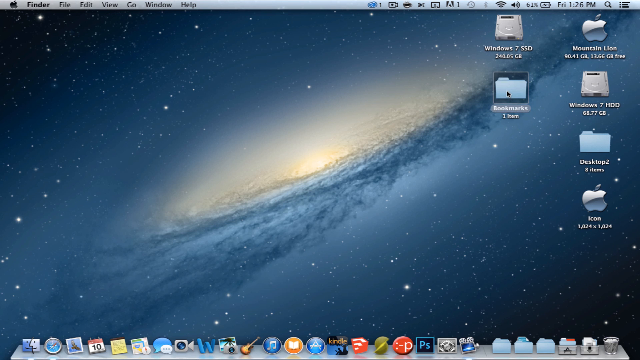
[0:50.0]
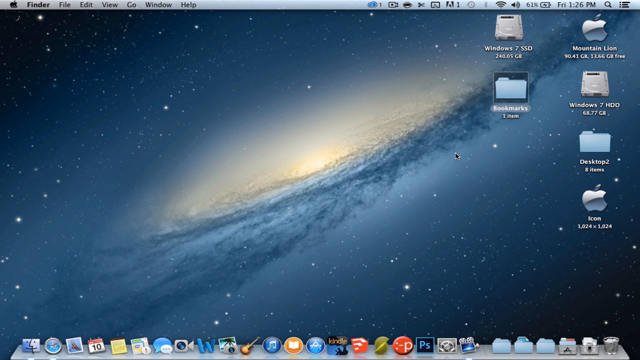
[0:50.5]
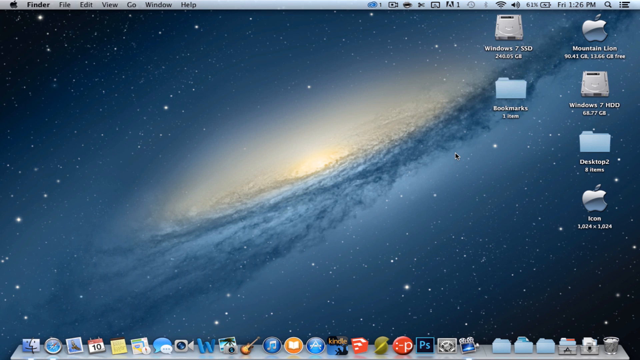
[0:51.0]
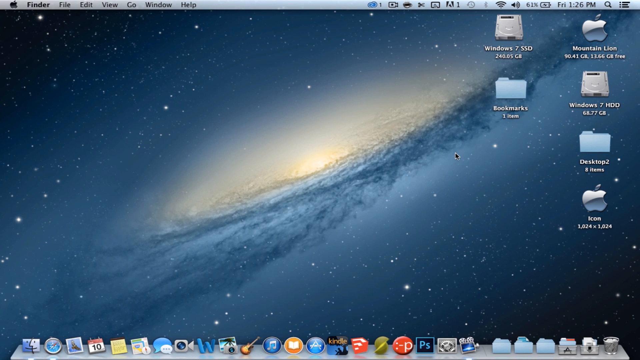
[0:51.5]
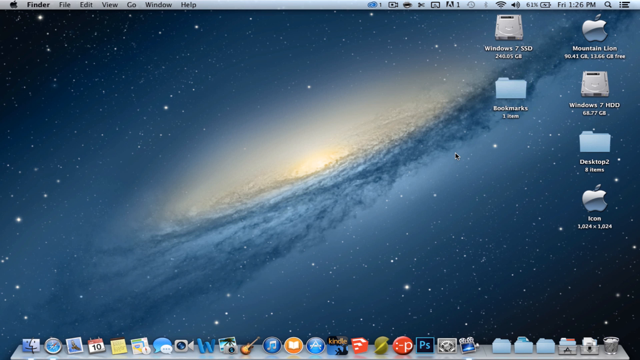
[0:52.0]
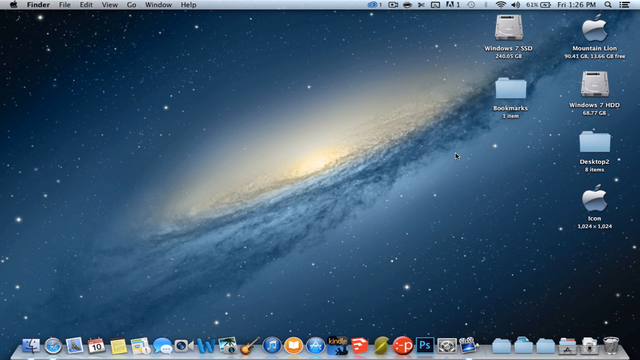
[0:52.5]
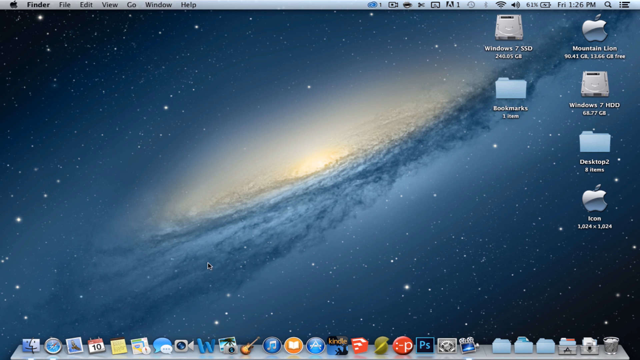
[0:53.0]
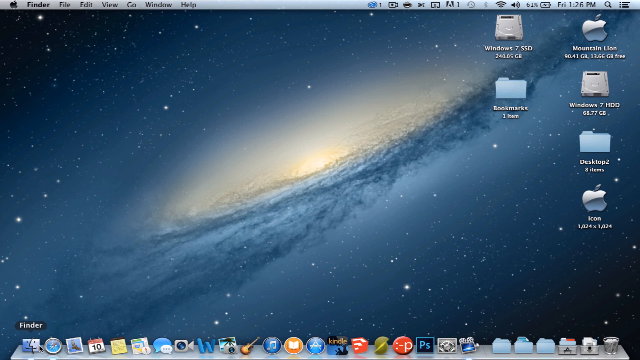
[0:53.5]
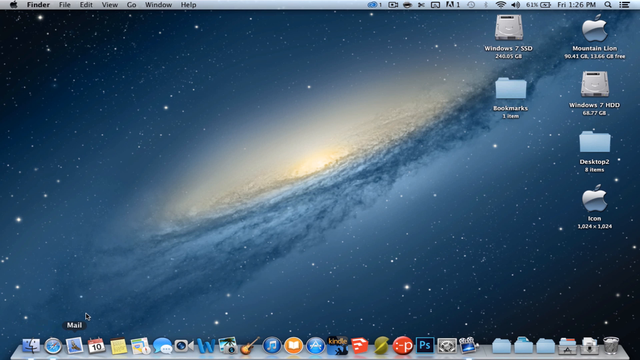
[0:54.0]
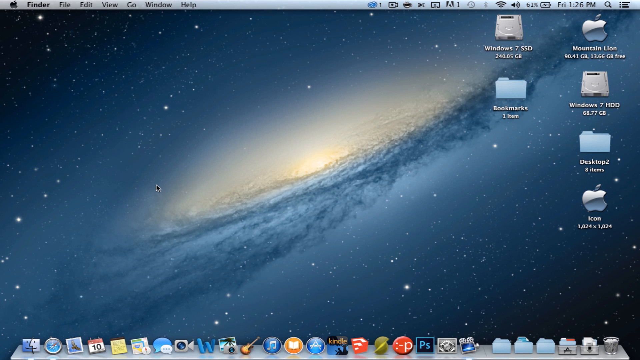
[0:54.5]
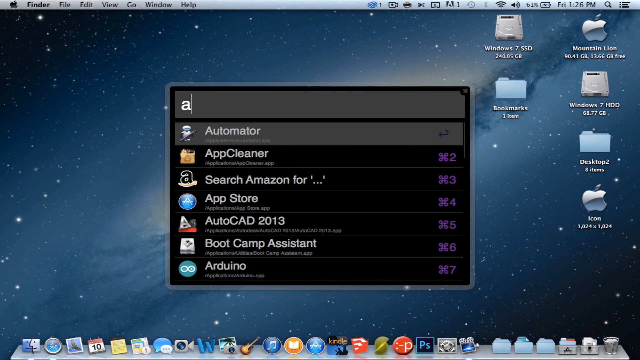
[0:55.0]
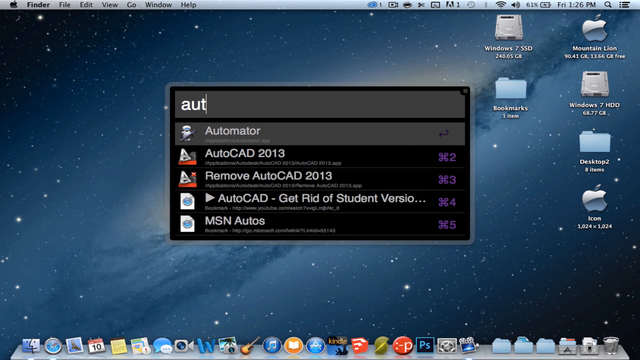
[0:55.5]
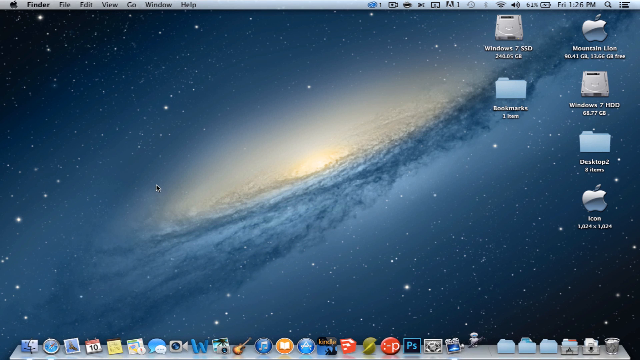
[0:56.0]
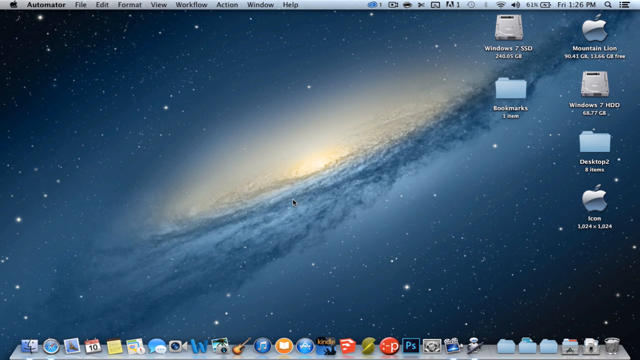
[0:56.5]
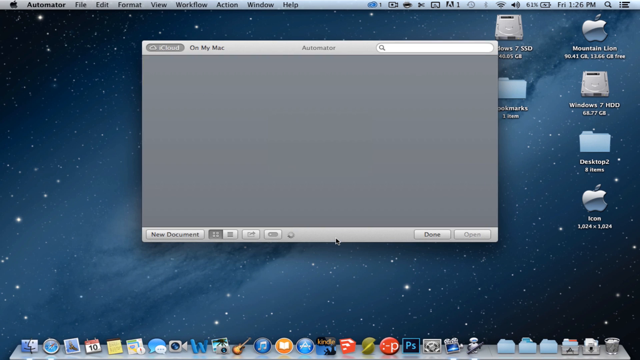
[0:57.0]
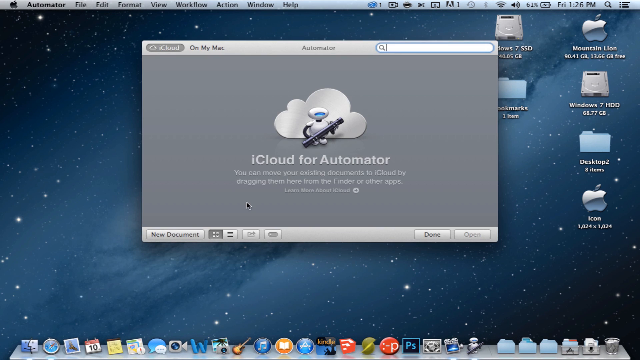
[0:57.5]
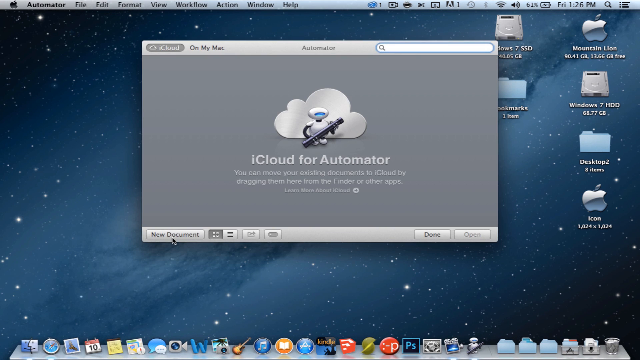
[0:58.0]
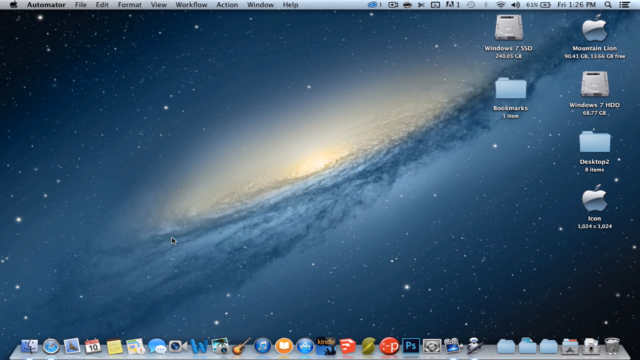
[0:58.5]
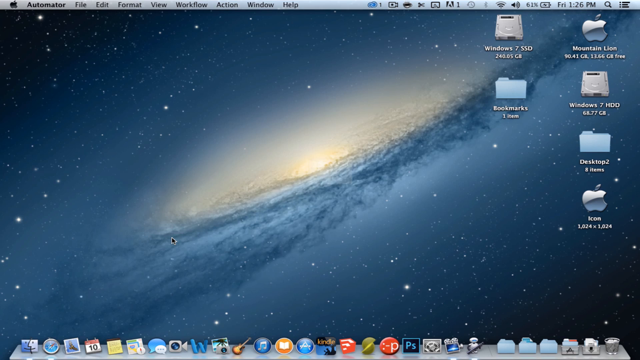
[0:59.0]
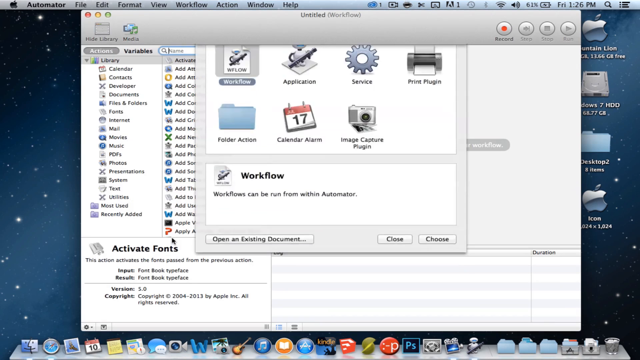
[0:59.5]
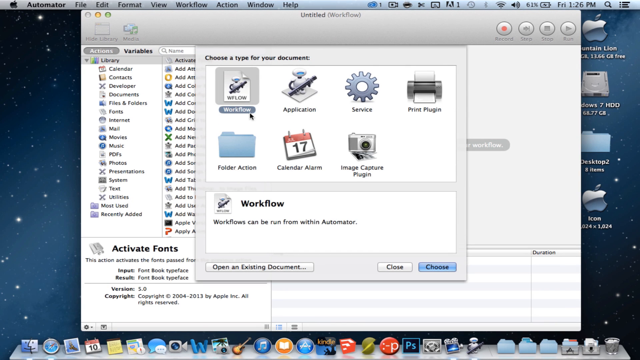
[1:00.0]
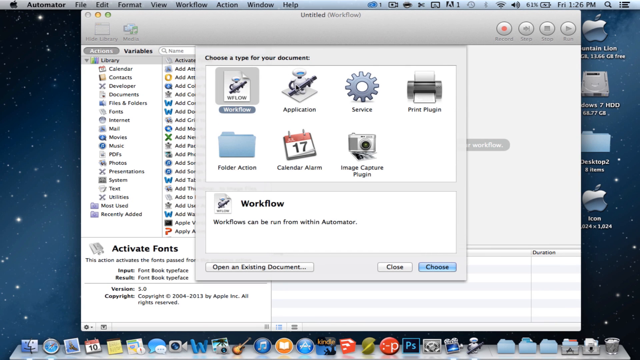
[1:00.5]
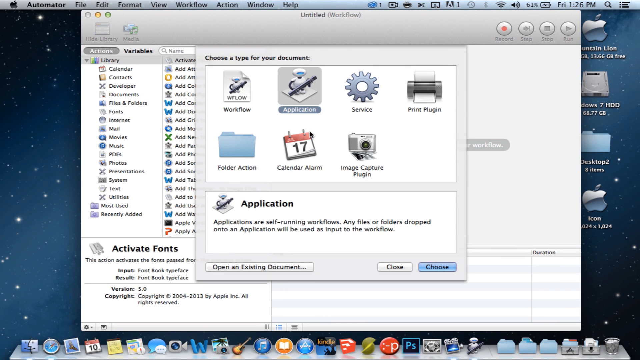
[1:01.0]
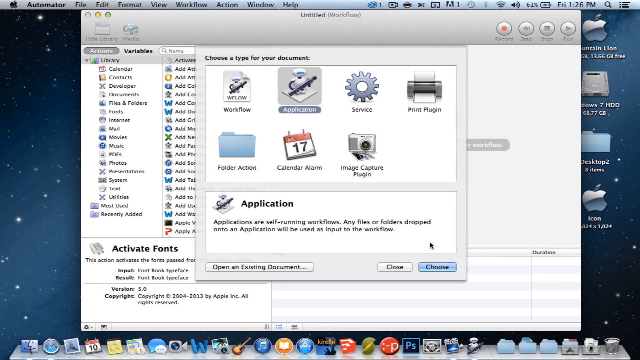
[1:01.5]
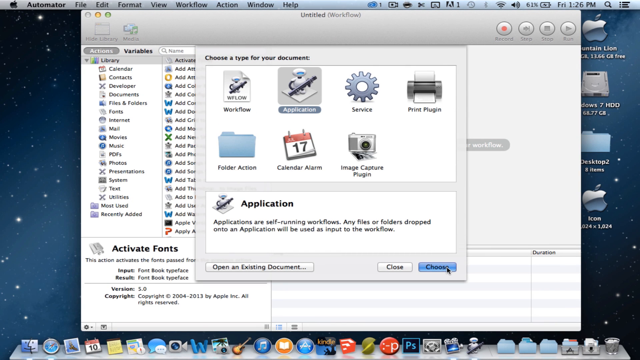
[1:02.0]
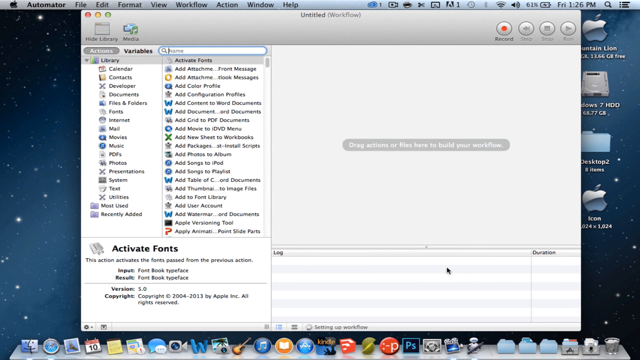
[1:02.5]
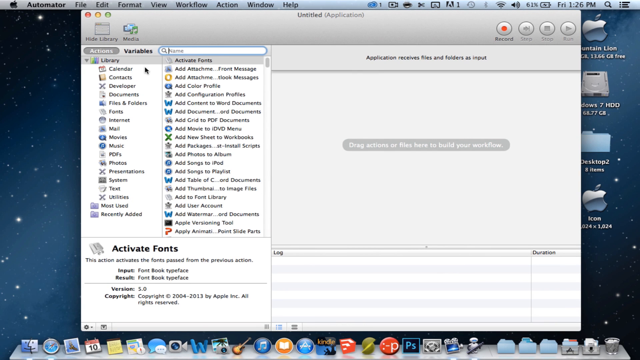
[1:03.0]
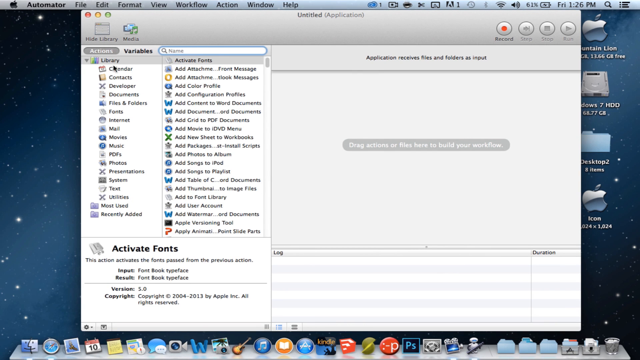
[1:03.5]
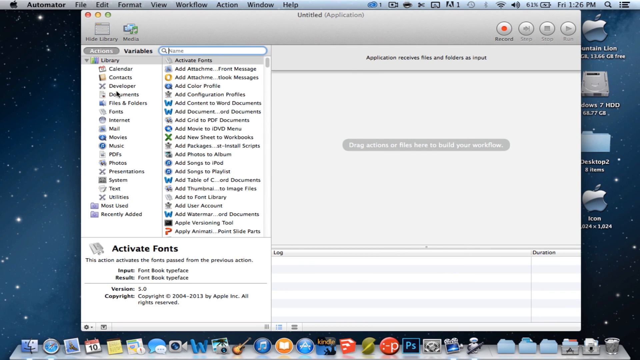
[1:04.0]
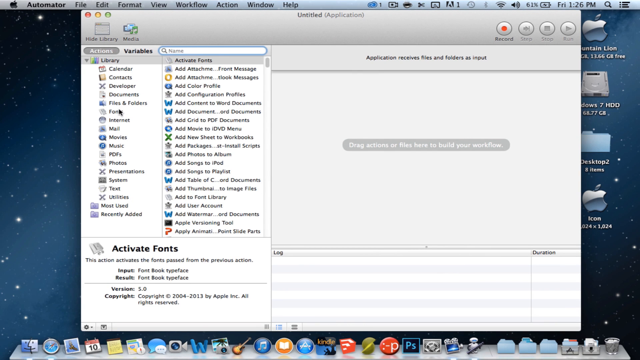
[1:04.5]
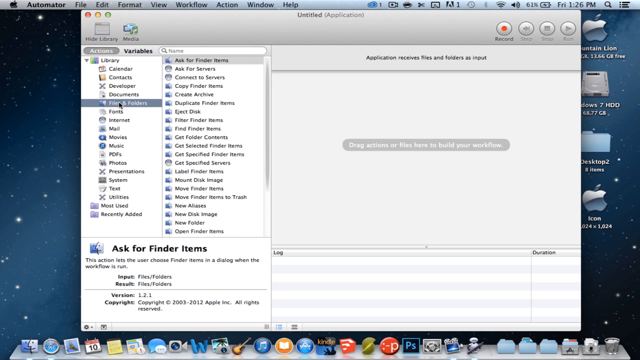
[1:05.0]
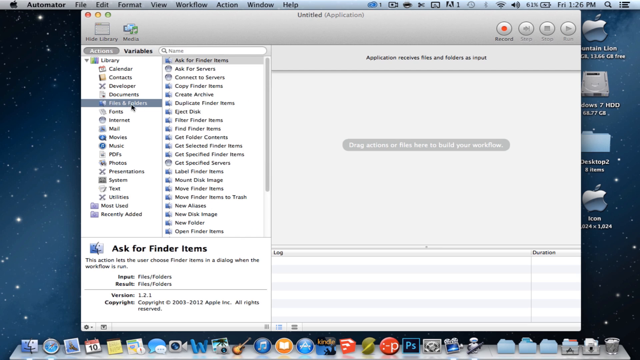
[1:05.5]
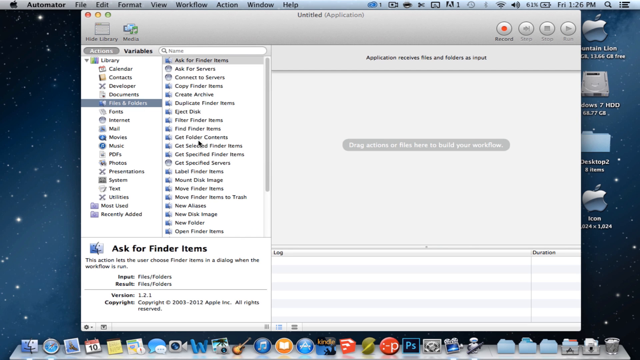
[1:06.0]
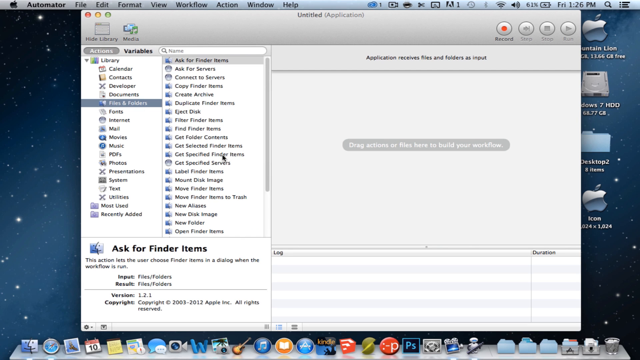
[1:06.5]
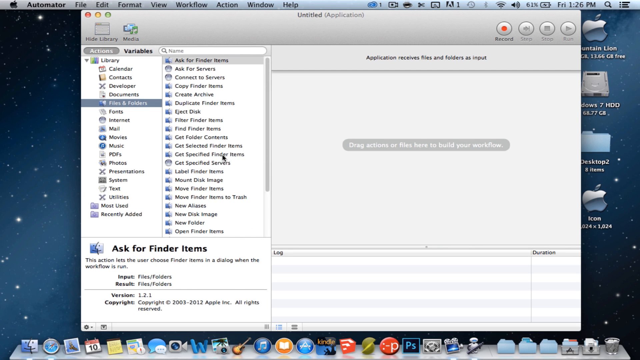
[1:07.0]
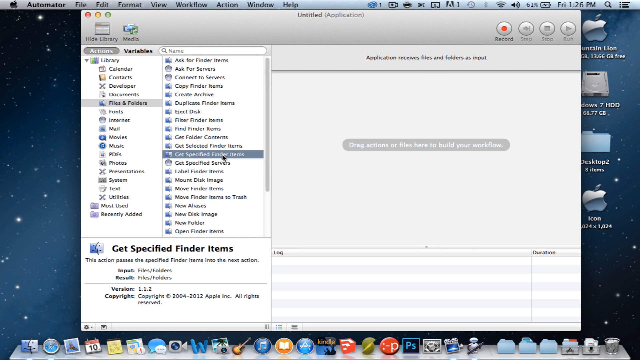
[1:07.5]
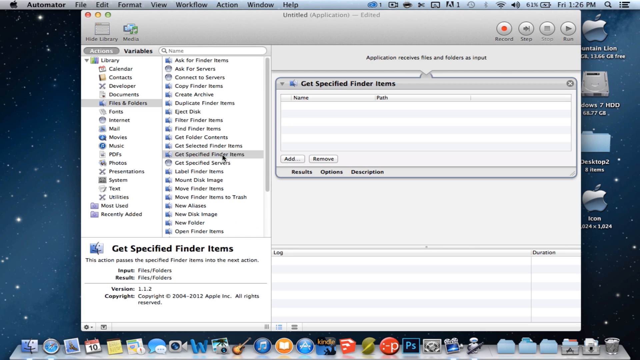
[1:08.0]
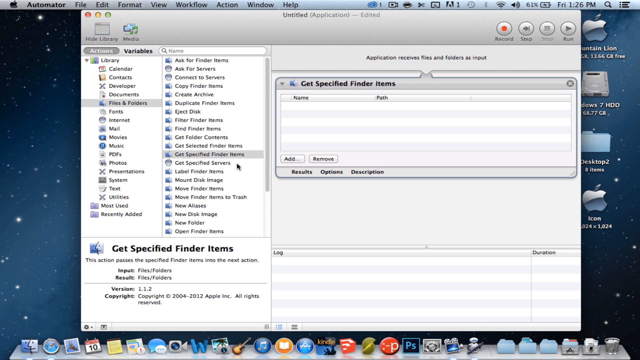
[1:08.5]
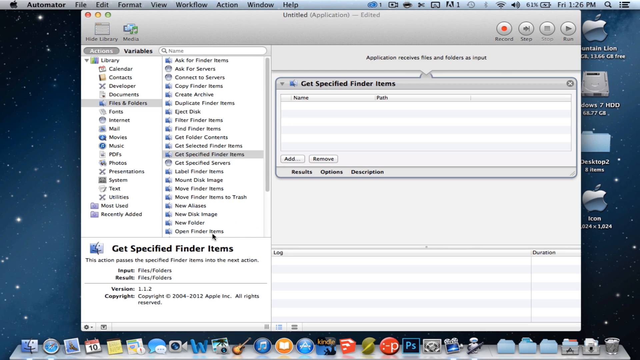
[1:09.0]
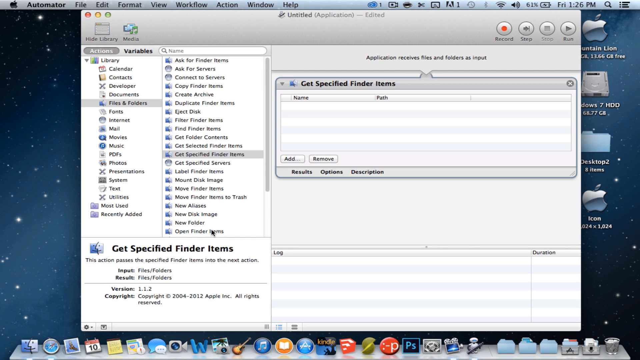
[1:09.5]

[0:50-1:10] A black search bar suddenly appears in the center of the desktop, possibly macOS Spotlight search. The user begins typing "AUT" but stops midway, and a moment later the iCloud version of Automator opens. The user selects New Document, which brings up a file type selection window; they choose Application and click Choose. Automator opens a blank workflow area. On the left side of the interface, the user navigates to the Files and Folders category, selects Get Specified Finder Items, and then hovers the mouse over Open Finder Items. These appear to be the early steps of building a simple Automator application that opens designated files or folders, and the setup is still partial.